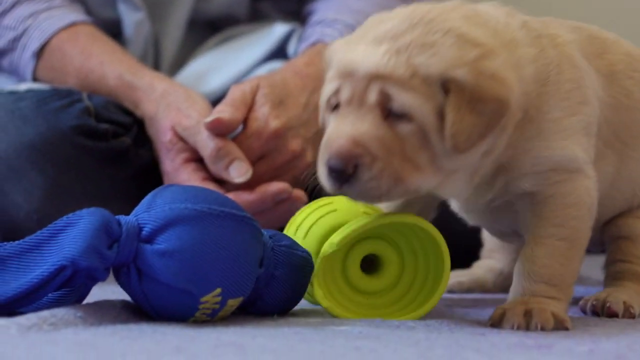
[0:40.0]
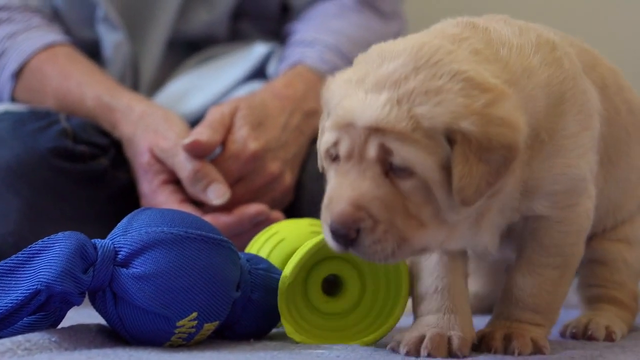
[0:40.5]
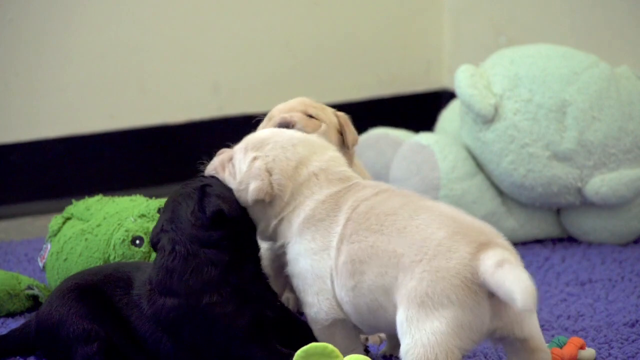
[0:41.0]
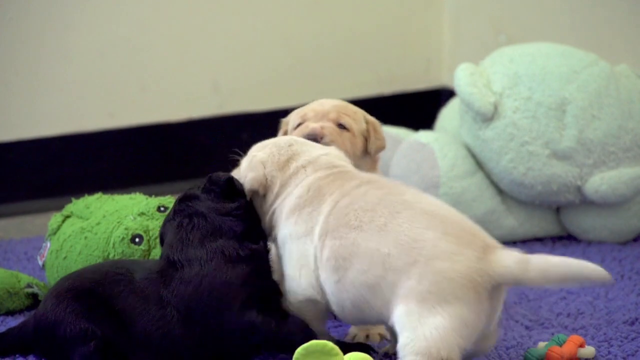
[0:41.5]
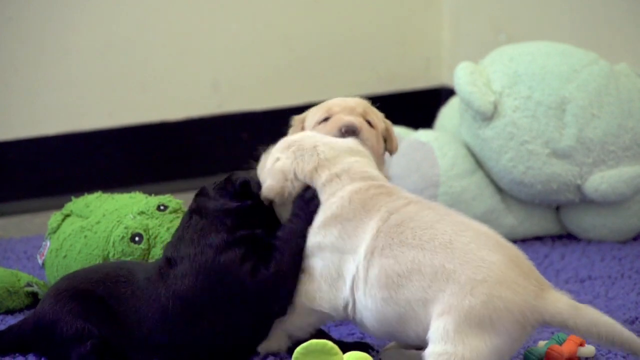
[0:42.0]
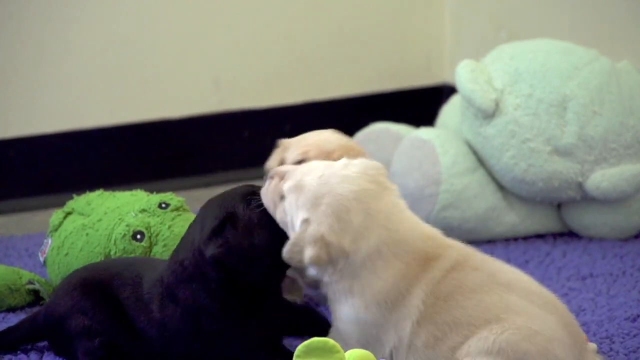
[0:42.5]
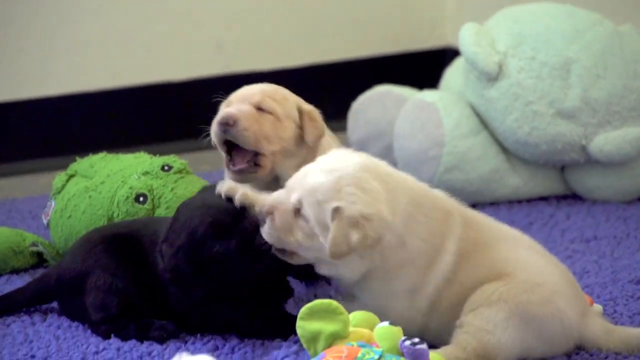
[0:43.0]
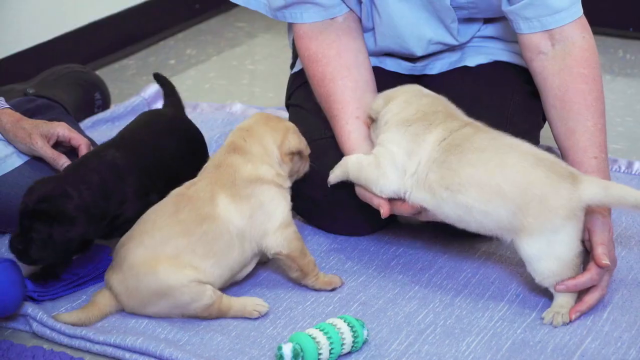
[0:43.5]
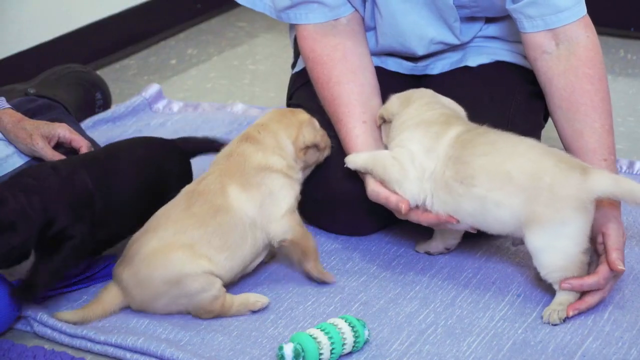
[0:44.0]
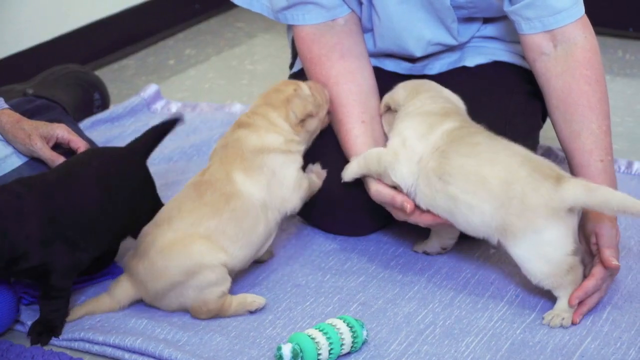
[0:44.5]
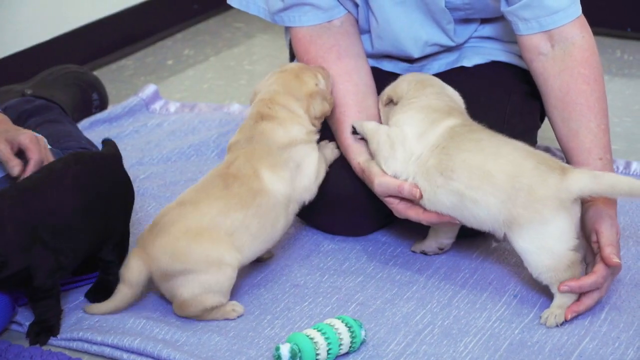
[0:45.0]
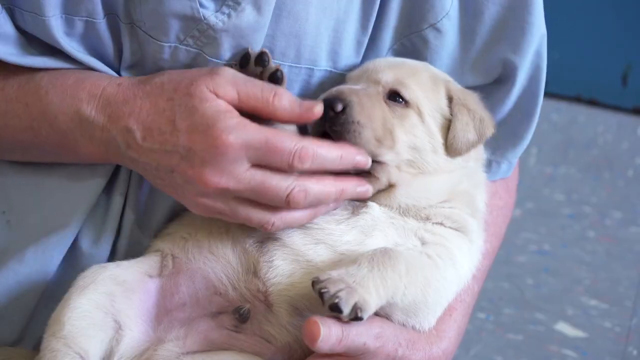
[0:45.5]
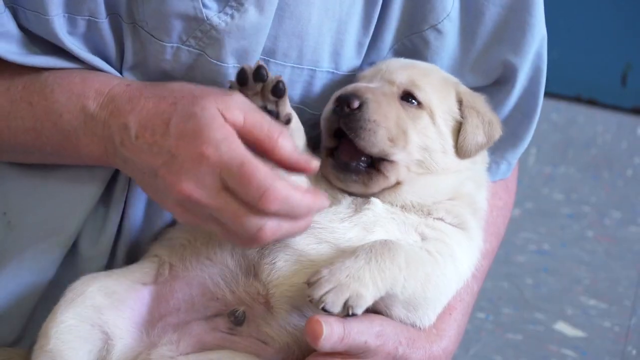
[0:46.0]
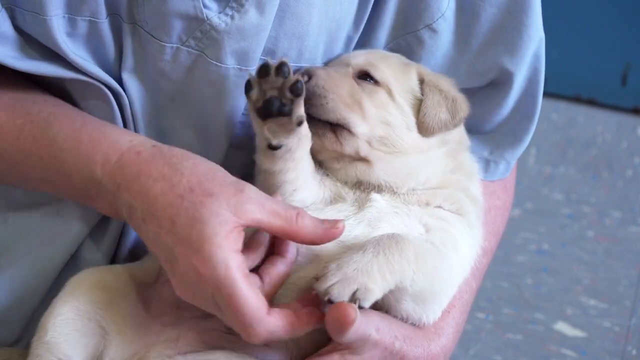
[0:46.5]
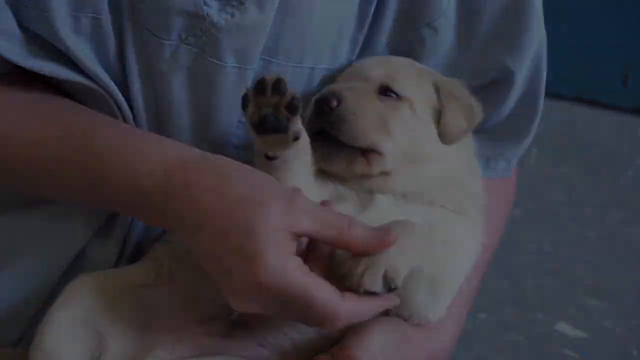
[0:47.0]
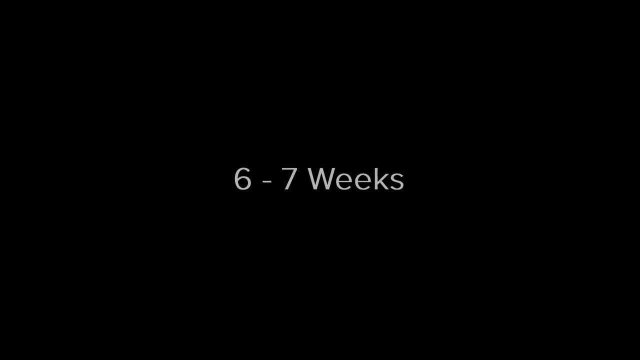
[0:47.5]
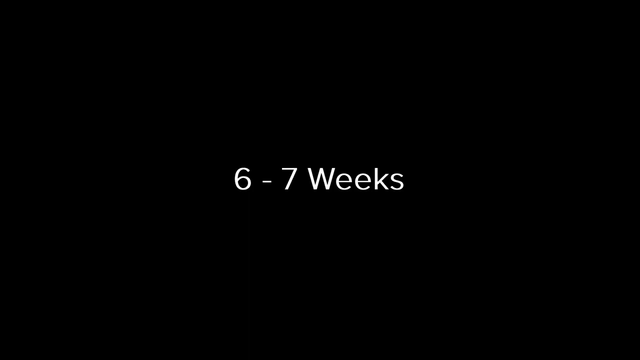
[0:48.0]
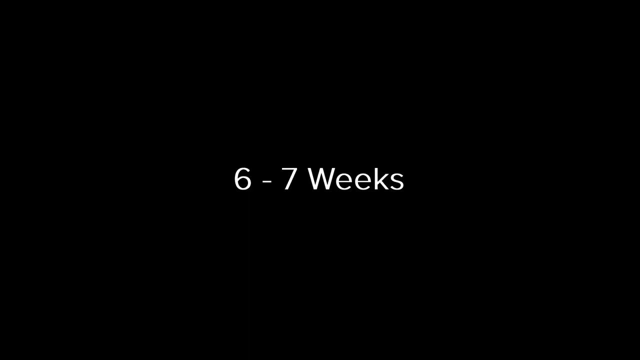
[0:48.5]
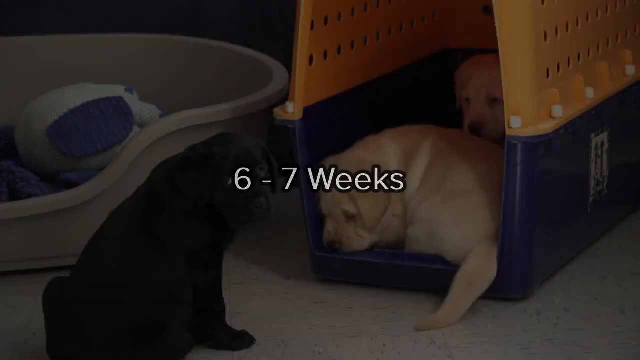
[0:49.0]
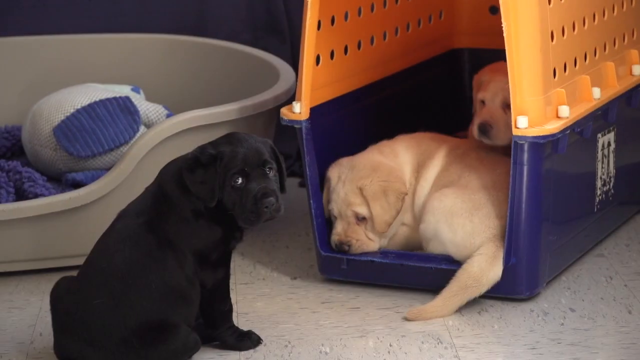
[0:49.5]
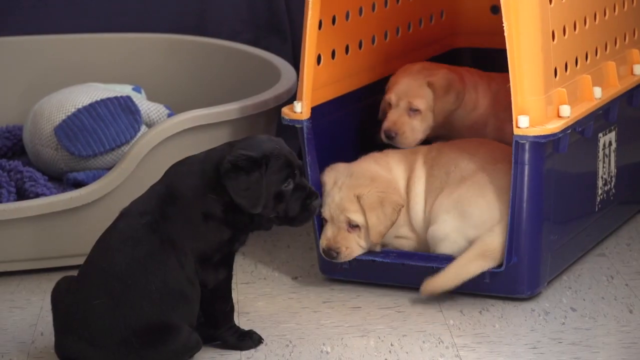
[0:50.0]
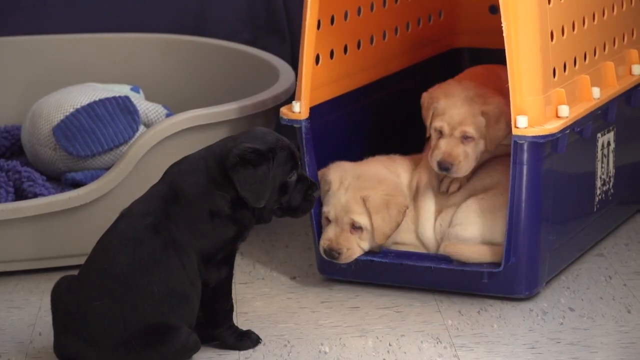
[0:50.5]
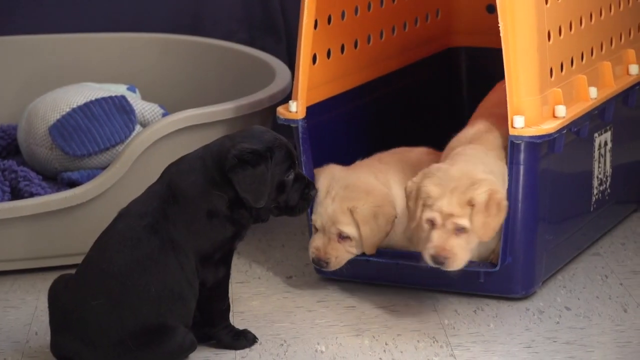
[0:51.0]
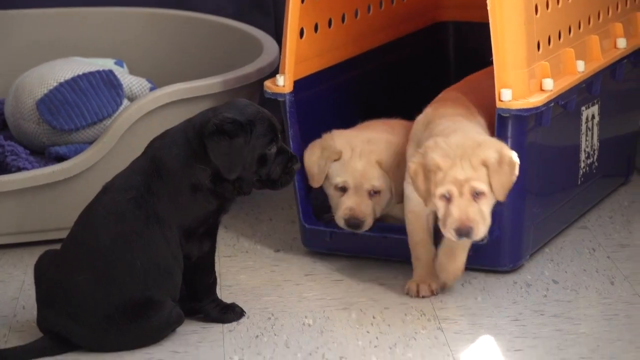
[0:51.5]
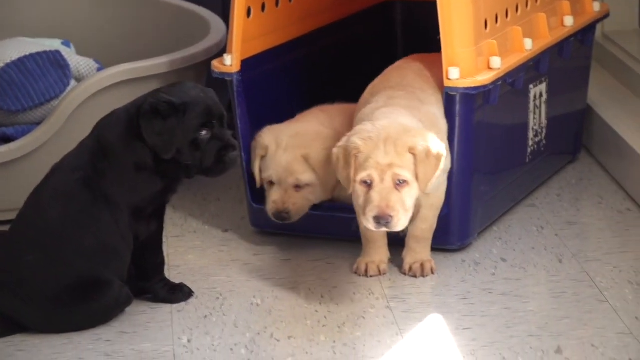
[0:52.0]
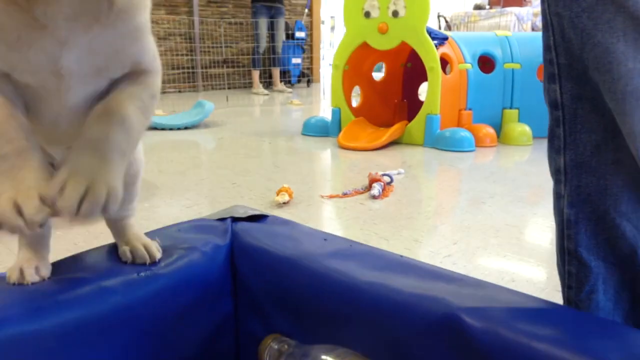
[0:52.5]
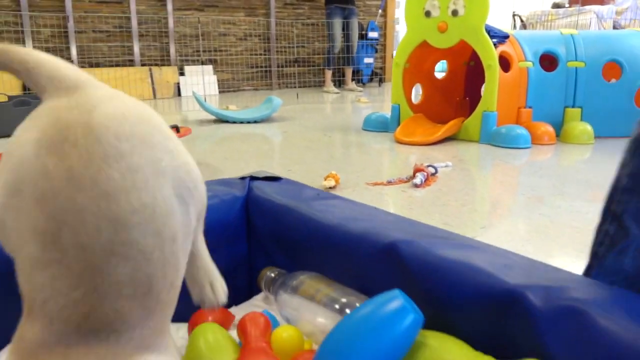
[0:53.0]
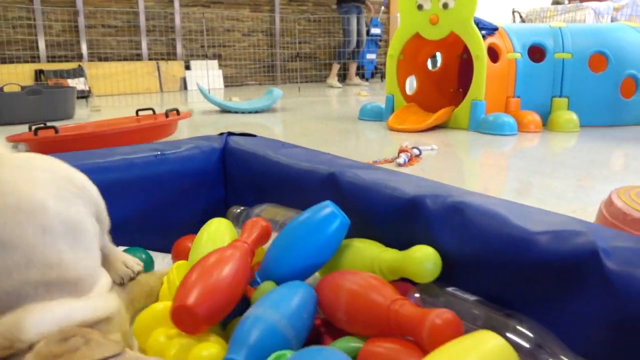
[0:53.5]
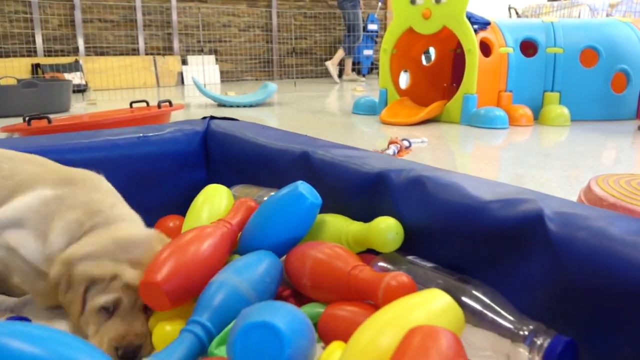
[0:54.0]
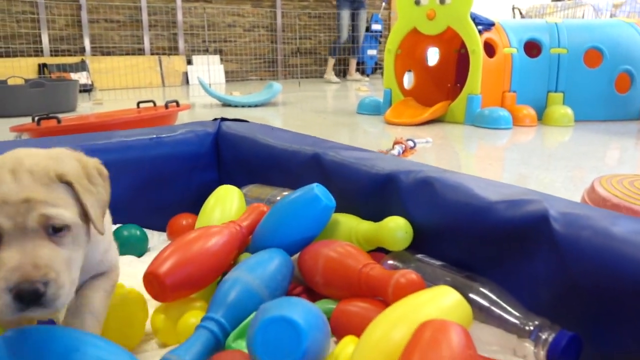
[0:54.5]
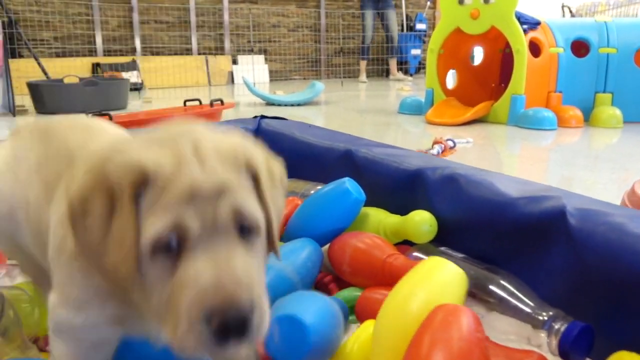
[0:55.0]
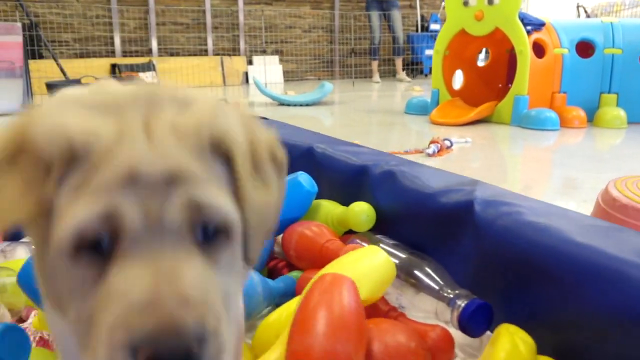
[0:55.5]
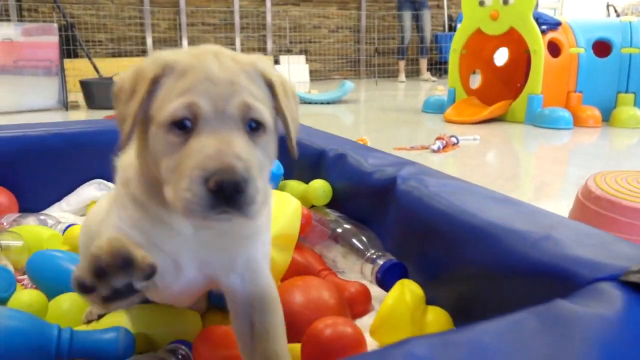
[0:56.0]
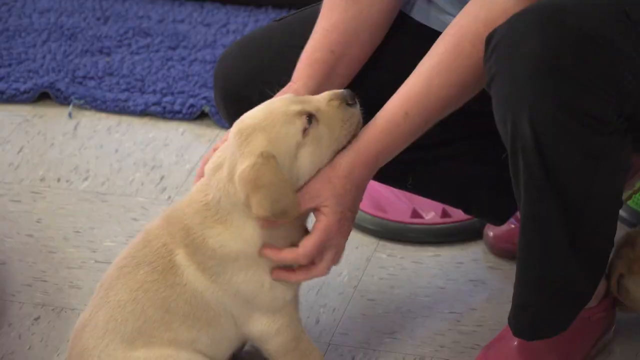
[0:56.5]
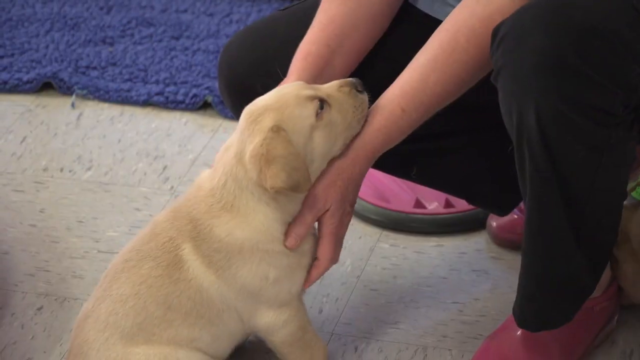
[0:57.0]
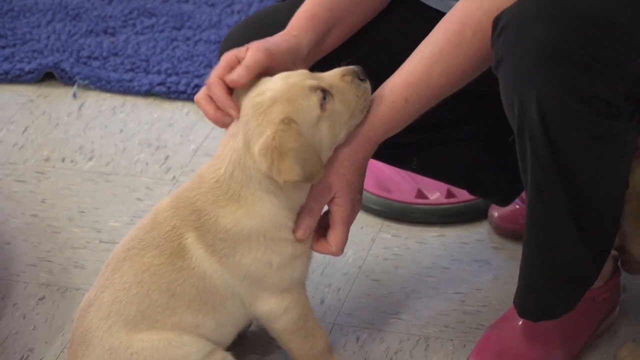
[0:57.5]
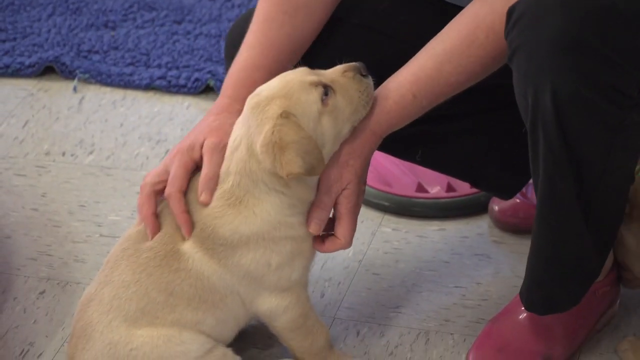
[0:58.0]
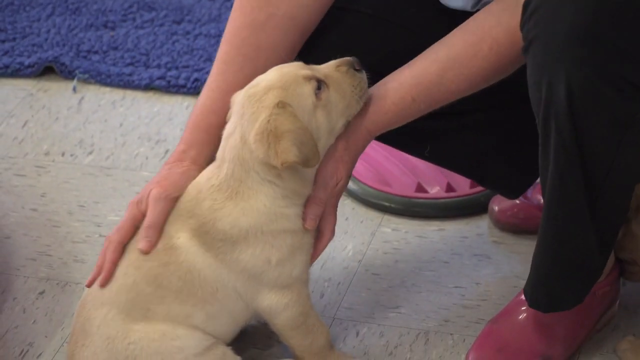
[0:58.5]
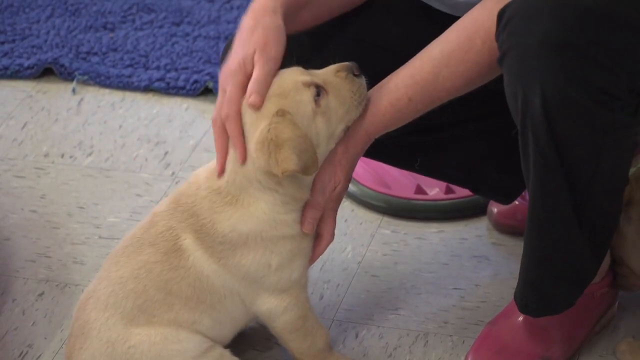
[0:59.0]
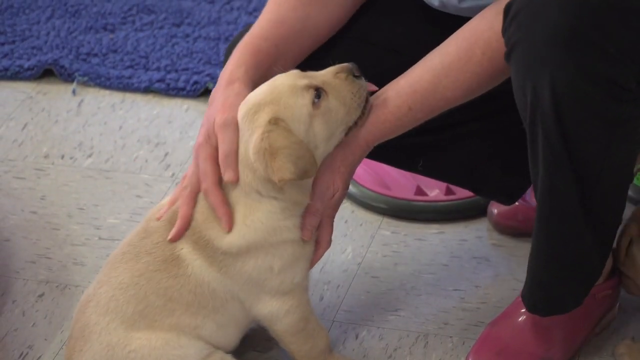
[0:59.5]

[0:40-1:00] In their pen, all three puppies play-fight. One of the golden puppies and the black one butt heads, both using their paws on each other's heads. The video cuts to another scene where one of the nurses holds a golden puppy in both hands while another golden puppy licks her arms, and the black puppy plays with the other nurse. The nurse then strokes the belly of one of the golden puppies. The video moves on to when the puppies are six or seven weeks old. They look a lot bigger, their eyes are fully opened, and they play quite energetically, entering a box of soft toys and frolicking around in it. The nurse strokes one of the golden puppies along the back of its head and its back; it stares up at her and looks extremely contented.